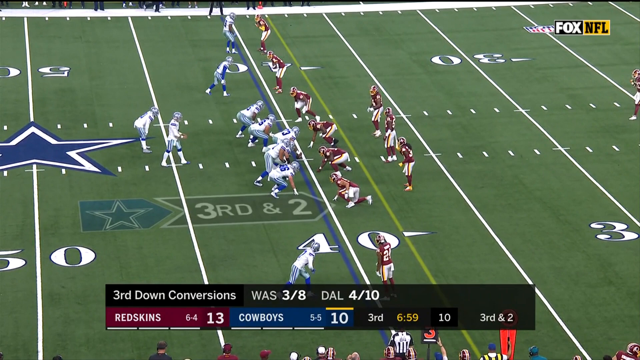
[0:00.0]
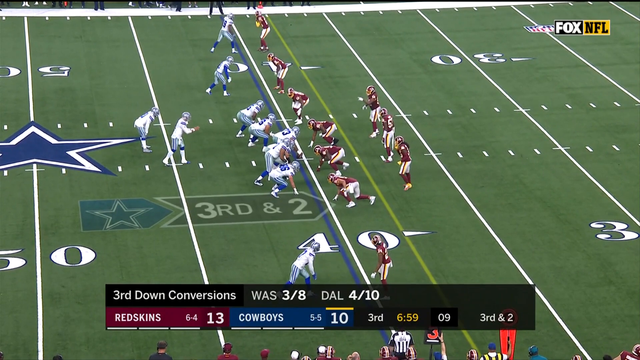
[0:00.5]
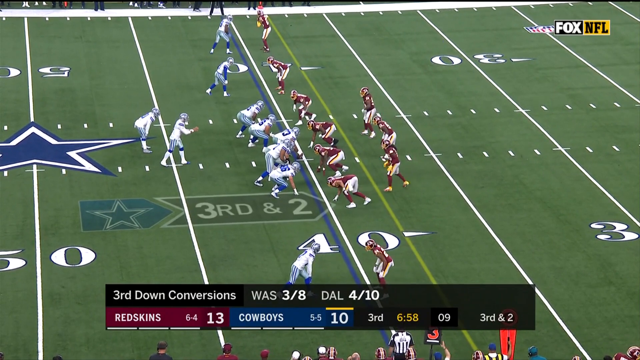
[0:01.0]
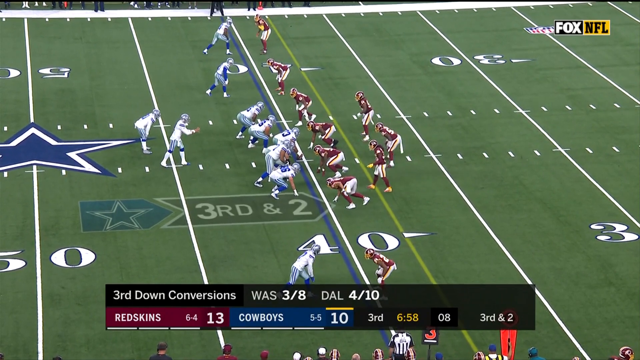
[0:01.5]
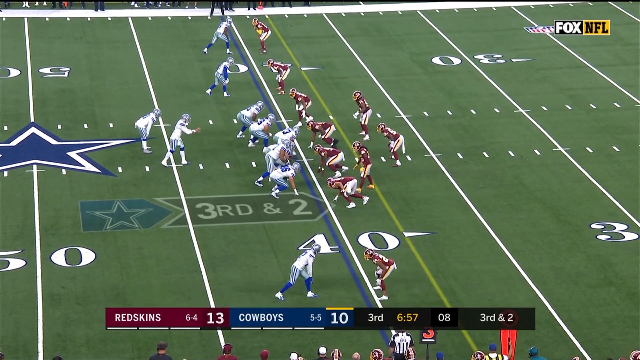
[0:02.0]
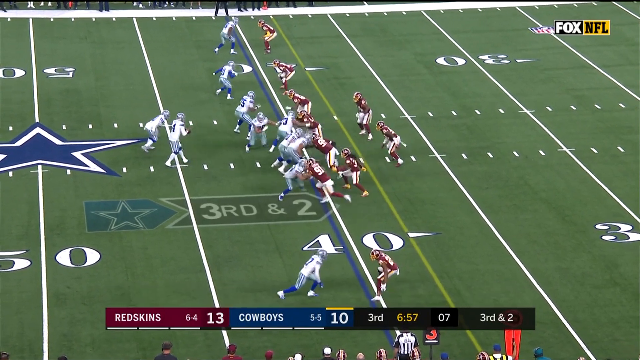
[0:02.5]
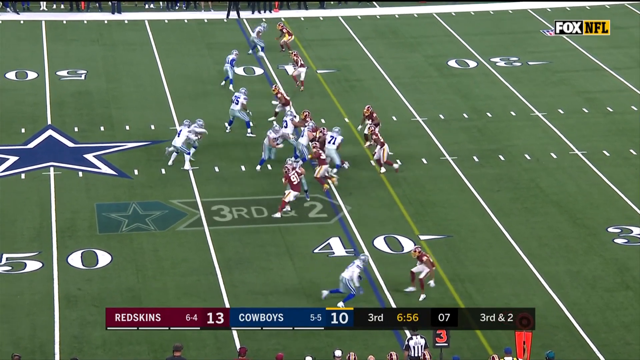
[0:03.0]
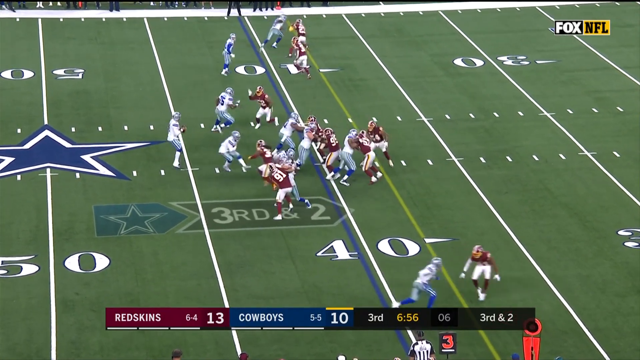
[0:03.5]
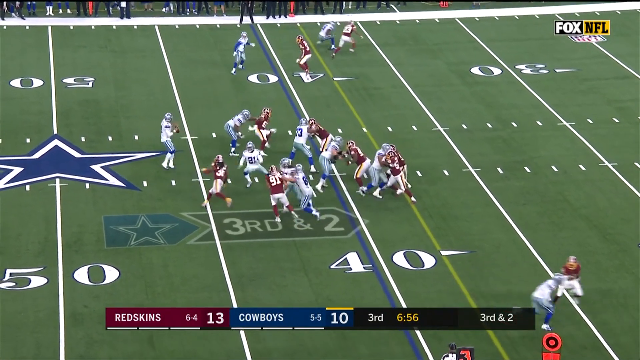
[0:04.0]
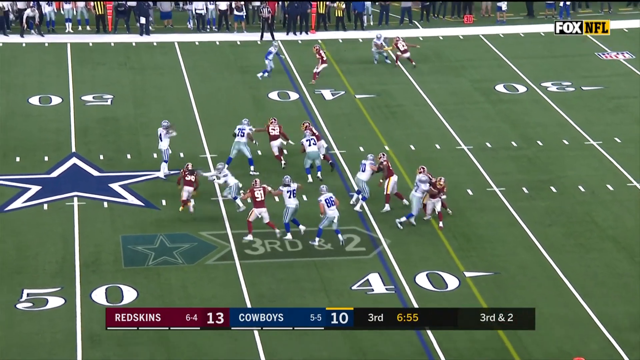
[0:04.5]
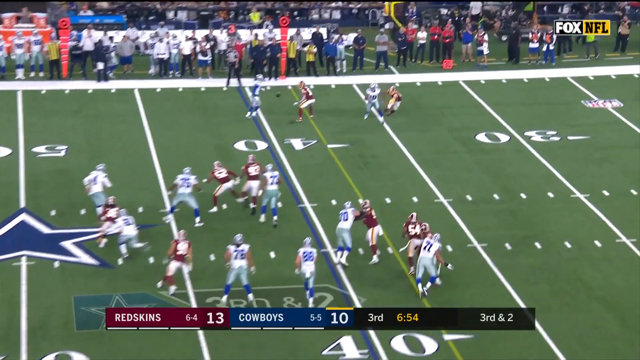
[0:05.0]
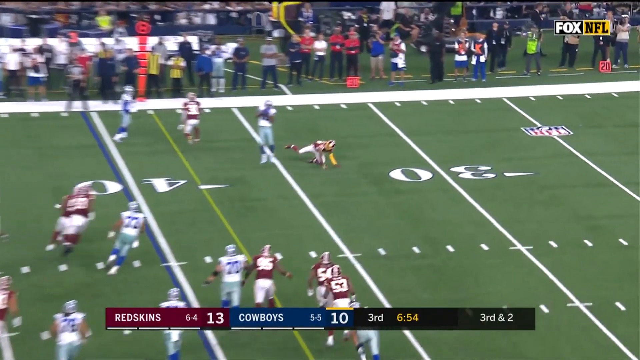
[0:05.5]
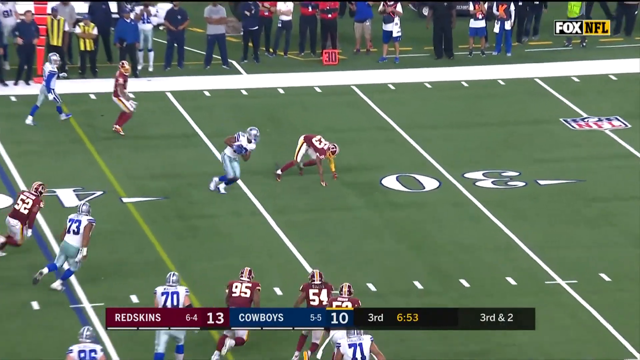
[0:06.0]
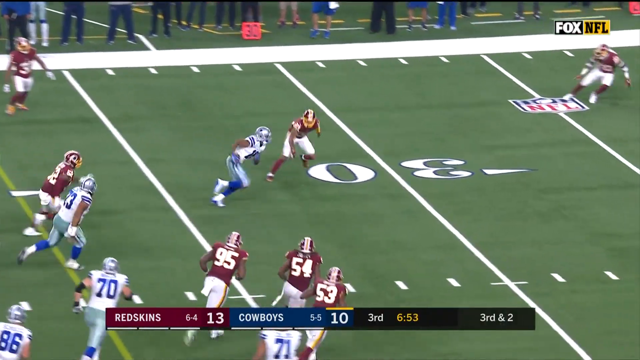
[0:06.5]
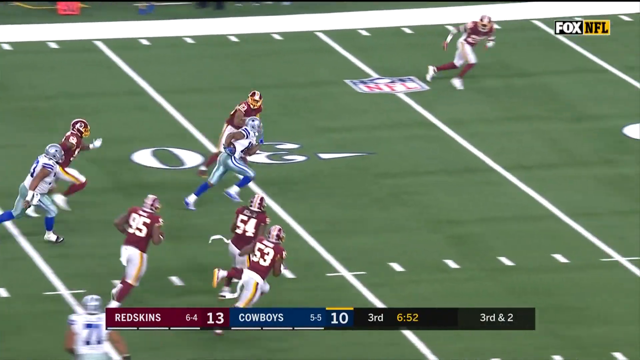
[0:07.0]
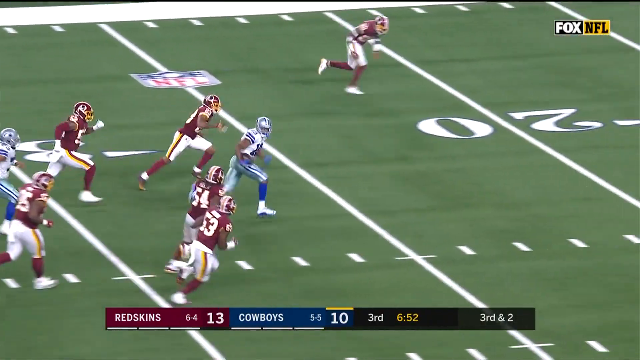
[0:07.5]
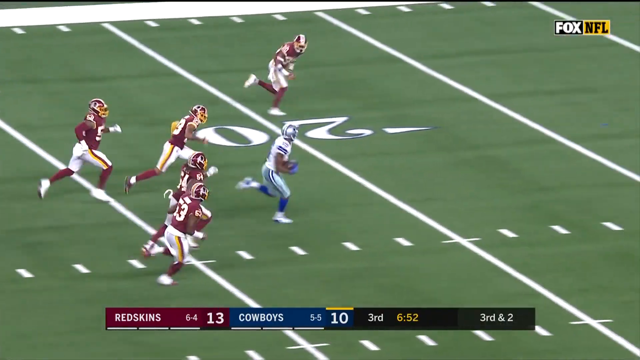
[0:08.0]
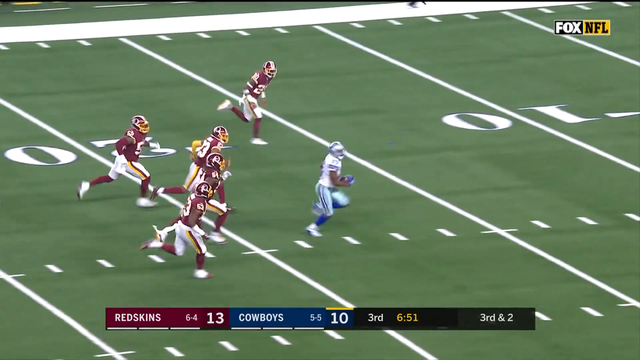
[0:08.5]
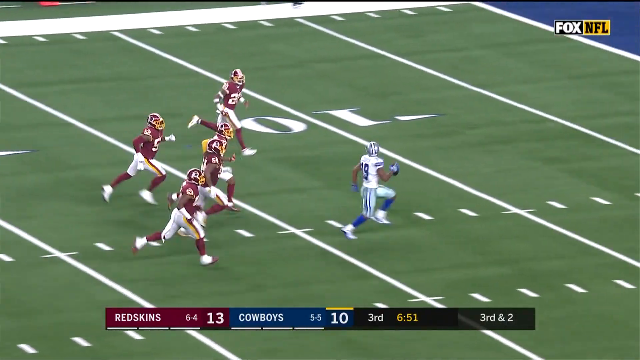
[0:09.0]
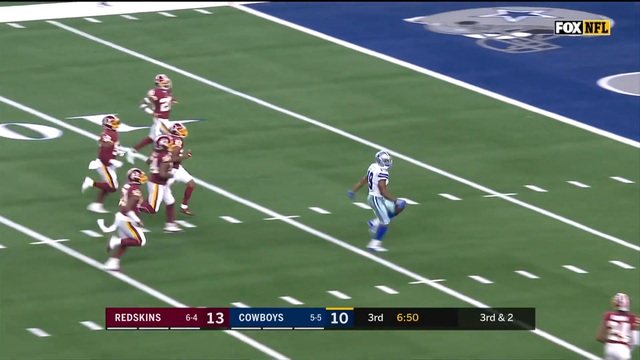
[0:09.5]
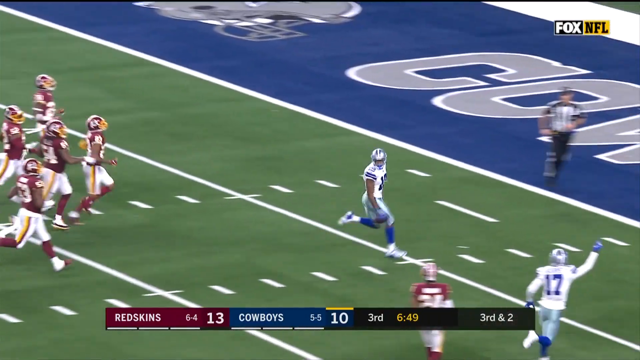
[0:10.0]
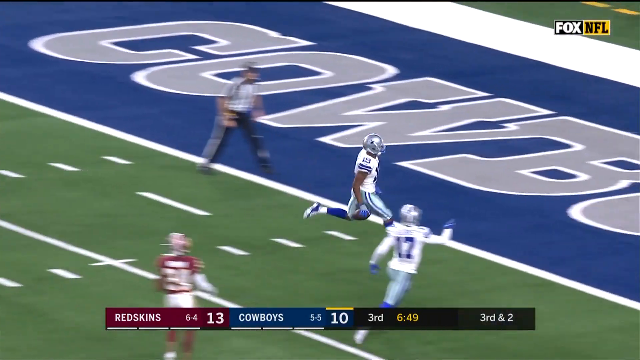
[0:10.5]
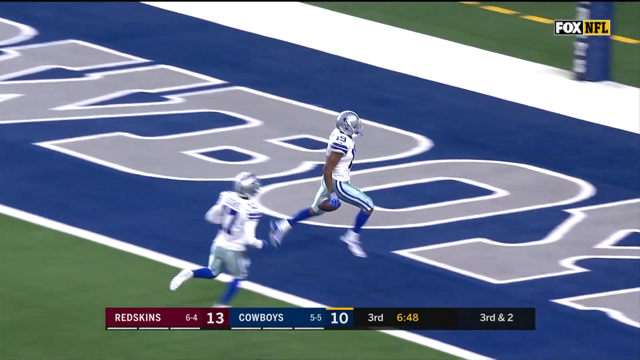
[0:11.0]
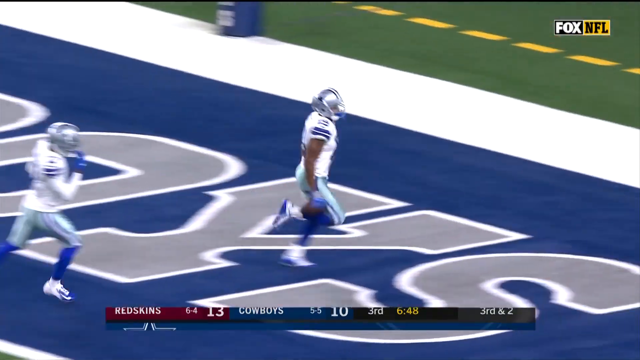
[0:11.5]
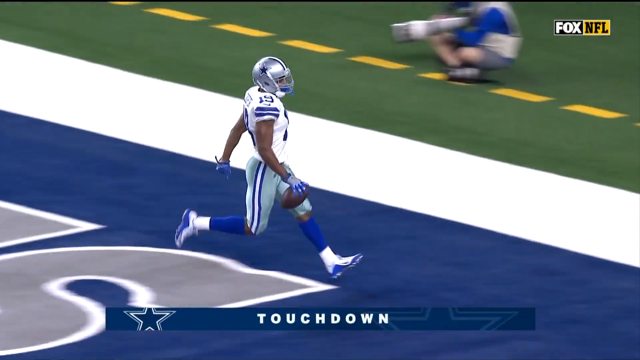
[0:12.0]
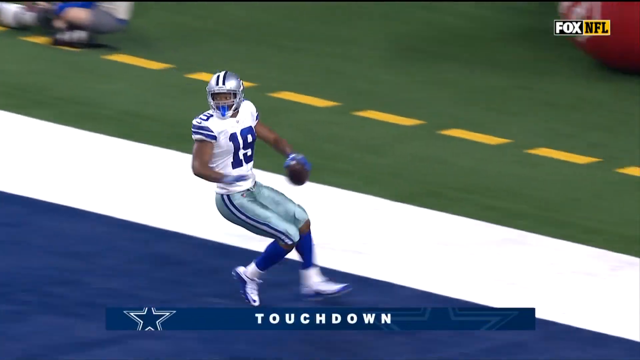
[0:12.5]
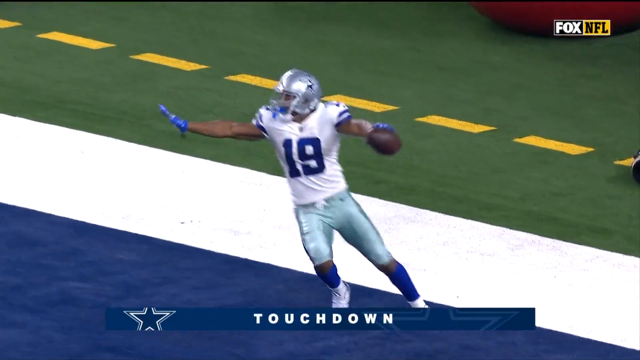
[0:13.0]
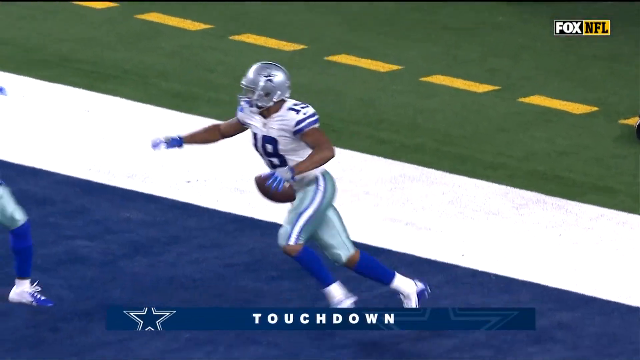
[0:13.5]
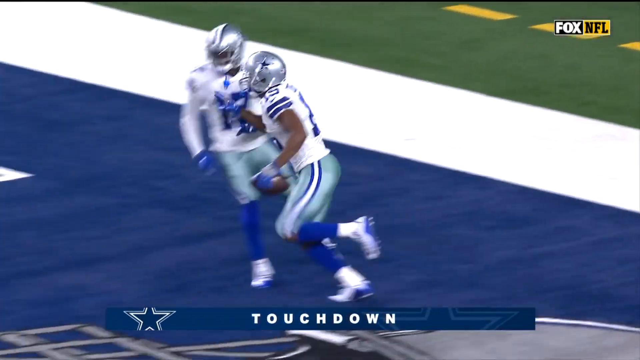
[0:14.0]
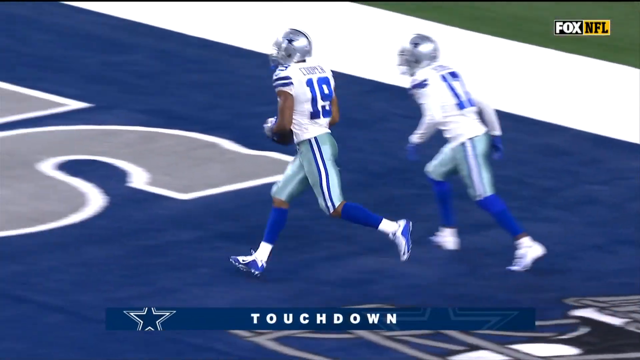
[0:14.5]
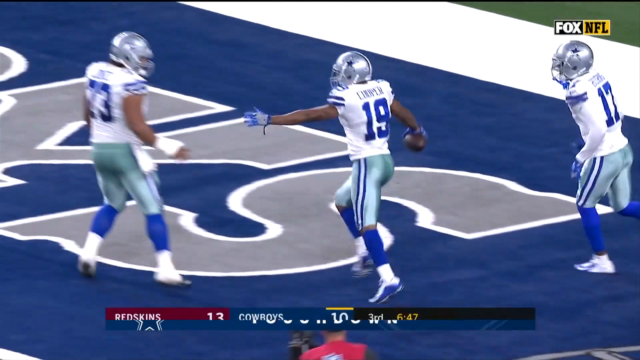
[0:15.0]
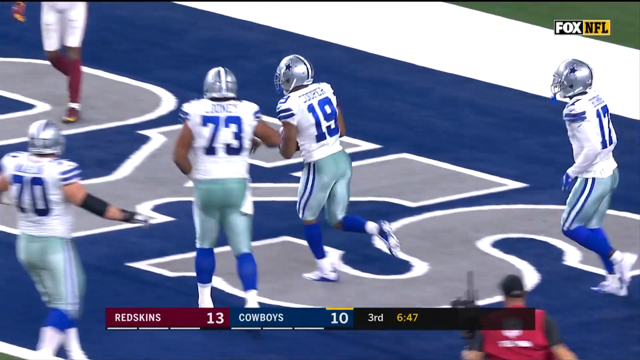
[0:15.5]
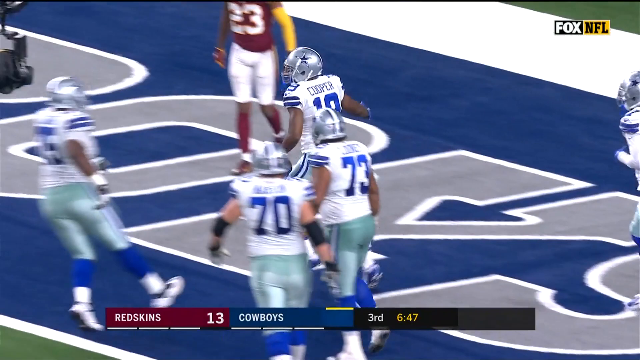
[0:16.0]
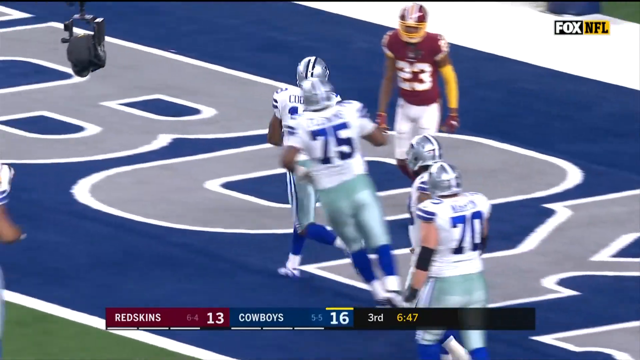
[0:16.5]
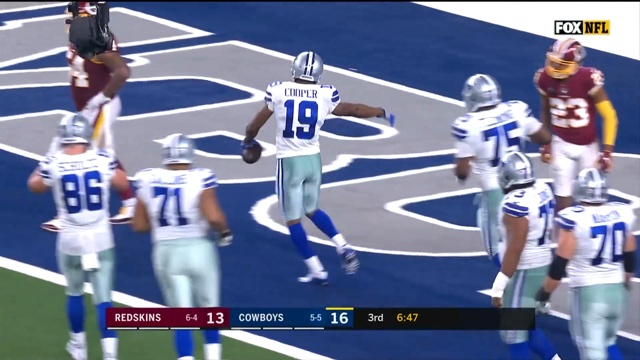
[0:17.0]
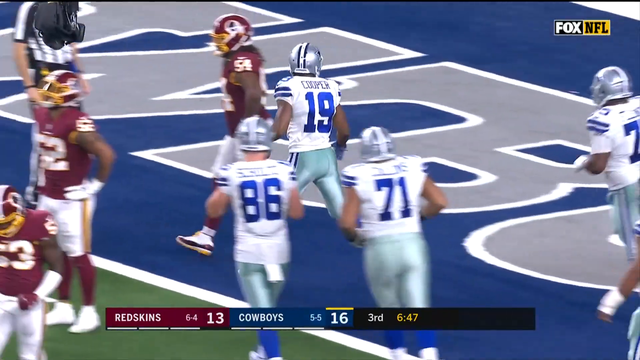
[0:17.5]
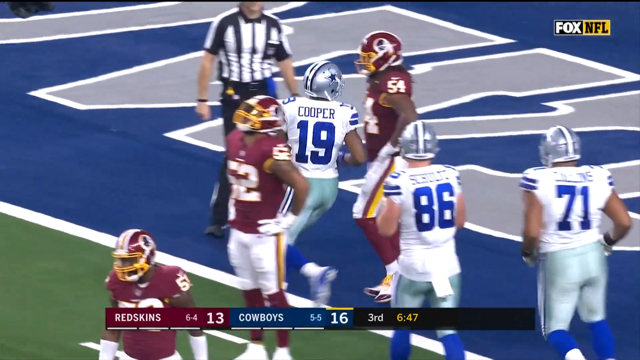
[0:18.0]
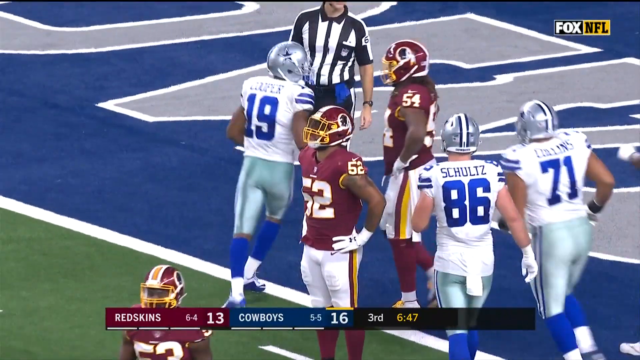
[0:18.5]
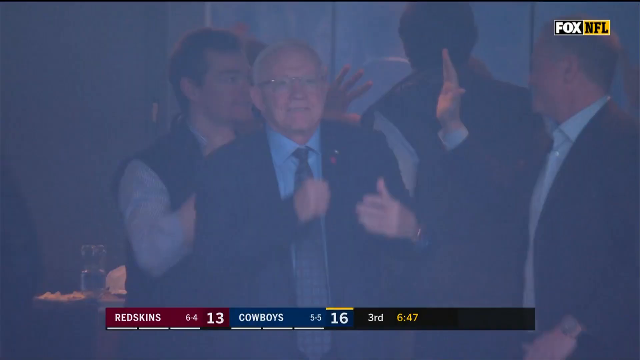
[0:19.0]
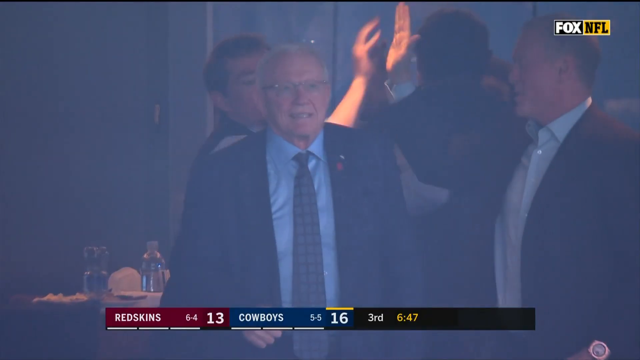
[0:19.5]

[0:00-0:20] The Dallas Cowboys play the Redskins, now called the Washington Commanders. Dak Prescott fakes the handoff and throws to Amari Cooper in the left corner. Cooper beats his defender, then beats the entire secondary and is about to run in for a touchdown. As he is about to celebrate, he tells all his teammates to stop. Jerry, the Cowboys' owner, looks kind of happy; he still has hair, and there are people high-fiving in the background.